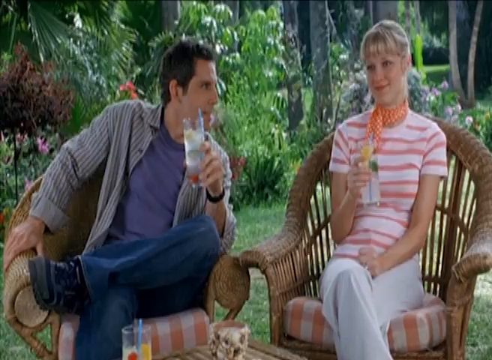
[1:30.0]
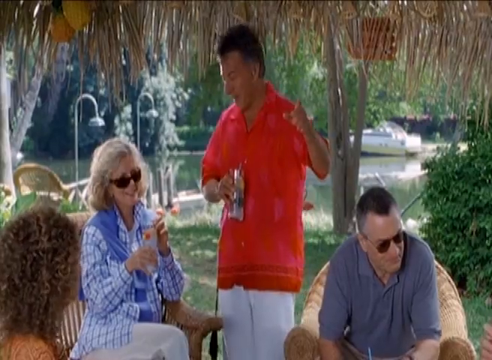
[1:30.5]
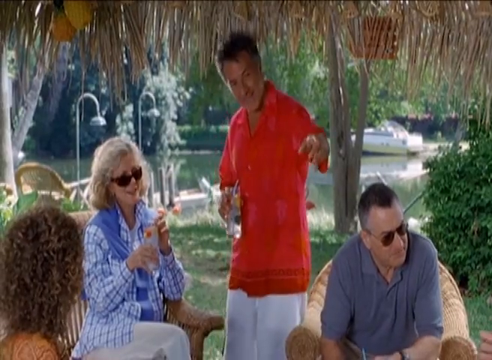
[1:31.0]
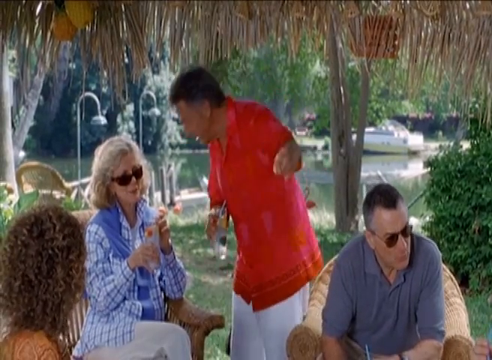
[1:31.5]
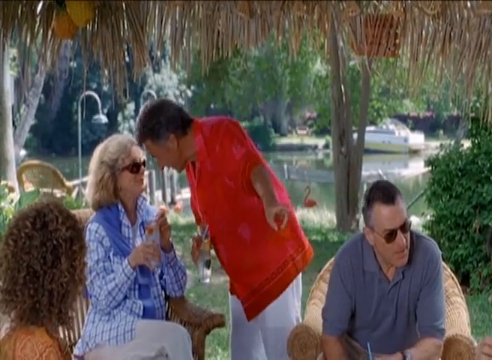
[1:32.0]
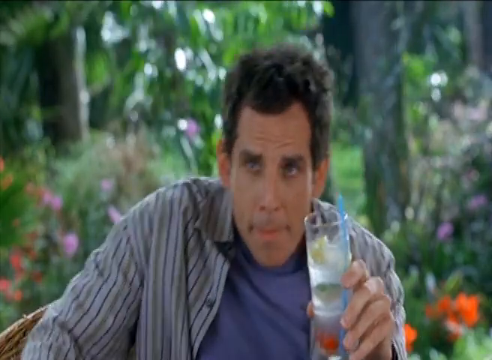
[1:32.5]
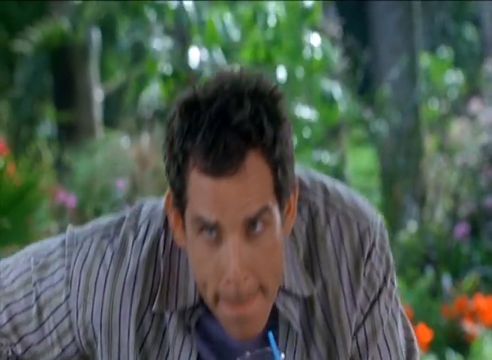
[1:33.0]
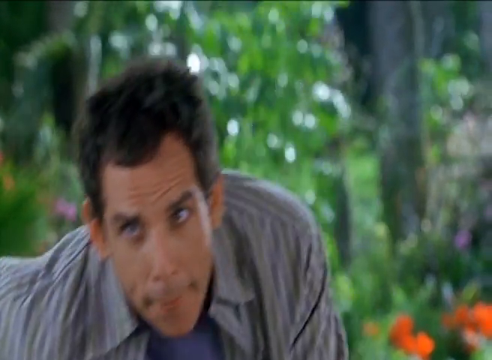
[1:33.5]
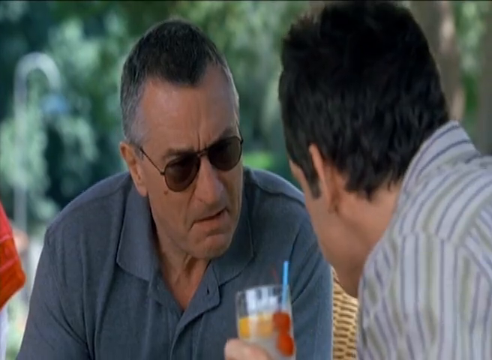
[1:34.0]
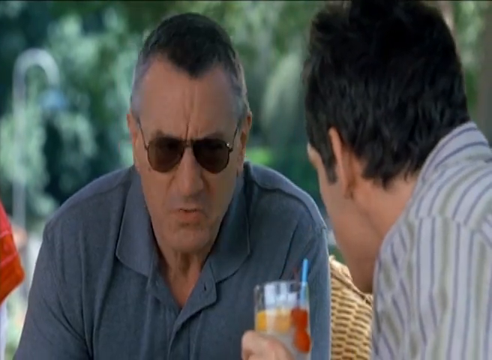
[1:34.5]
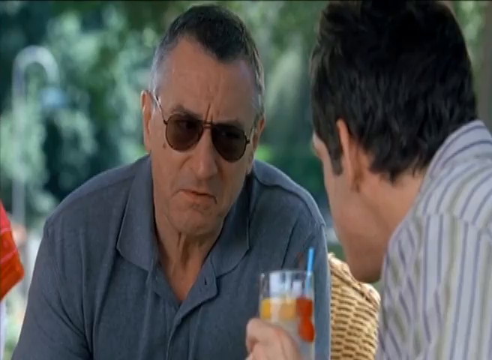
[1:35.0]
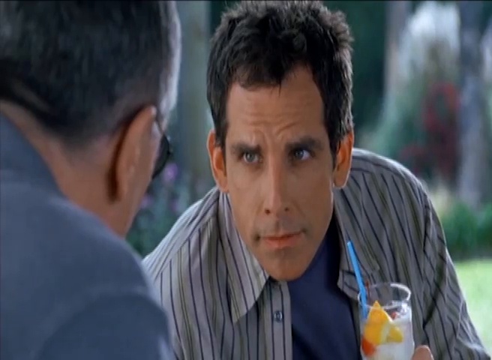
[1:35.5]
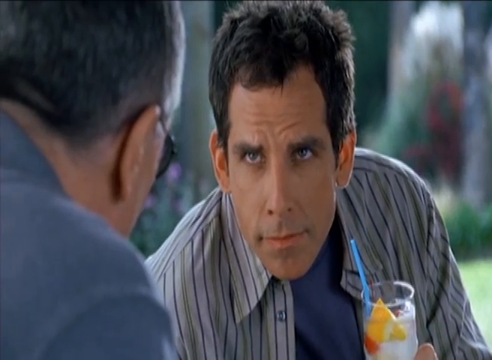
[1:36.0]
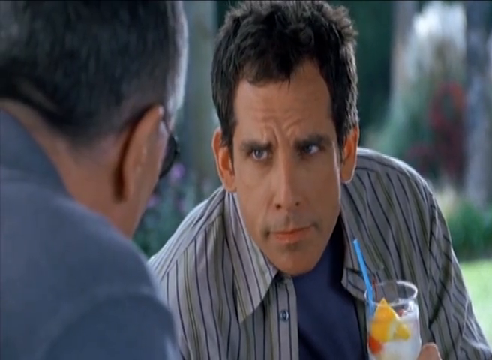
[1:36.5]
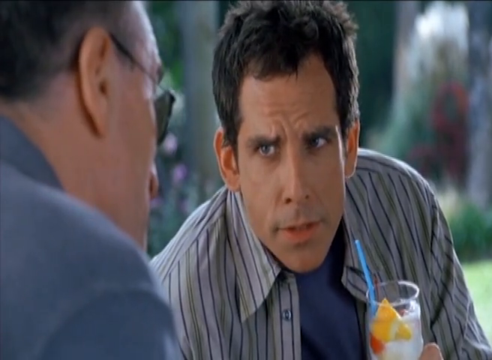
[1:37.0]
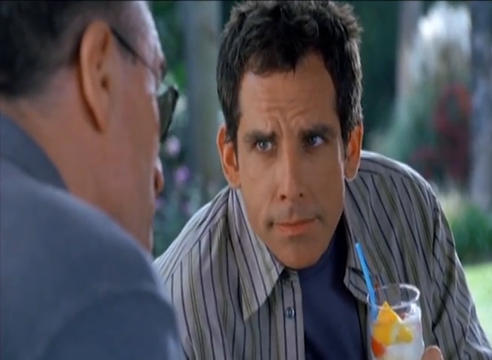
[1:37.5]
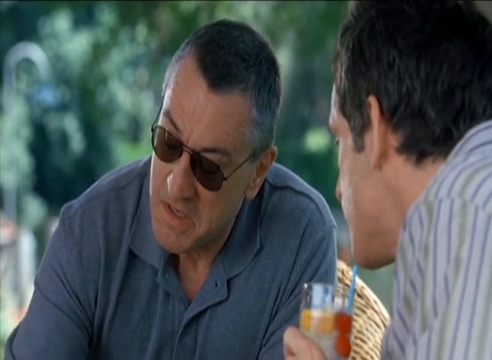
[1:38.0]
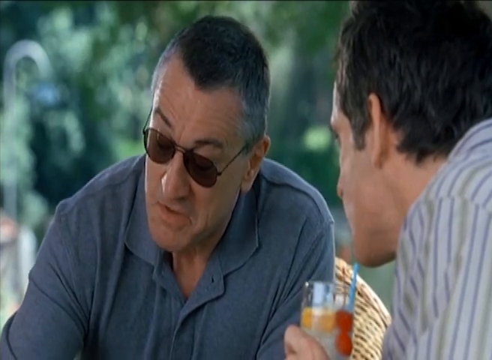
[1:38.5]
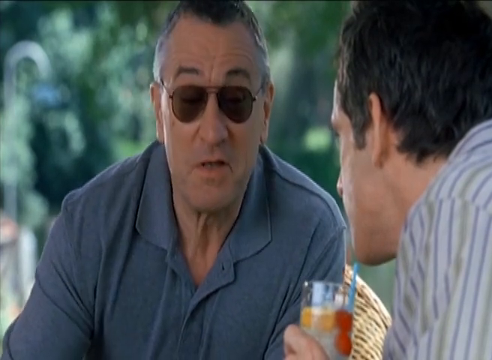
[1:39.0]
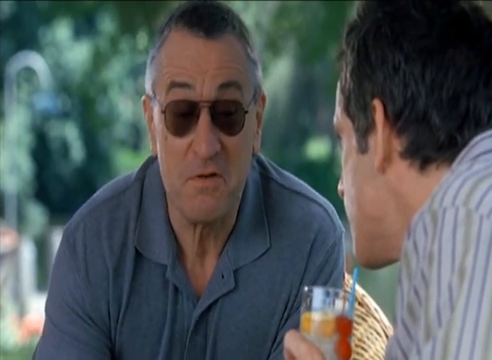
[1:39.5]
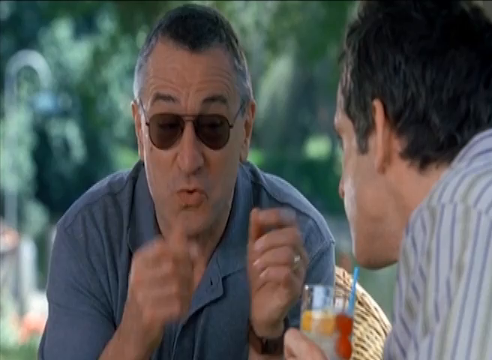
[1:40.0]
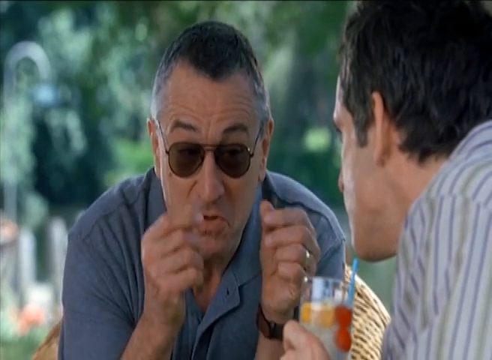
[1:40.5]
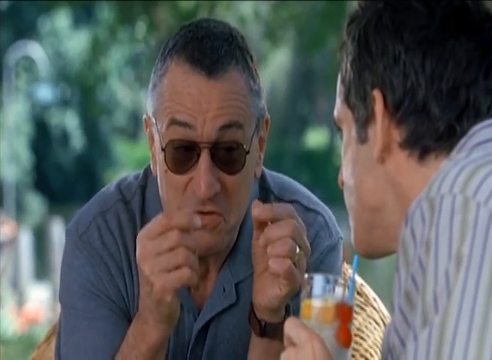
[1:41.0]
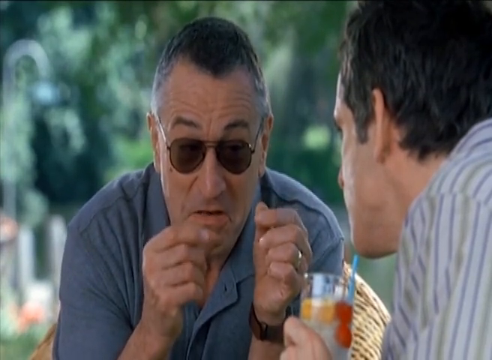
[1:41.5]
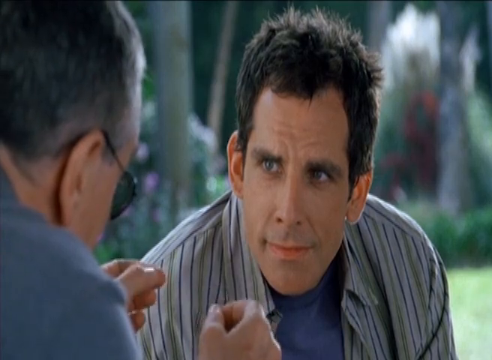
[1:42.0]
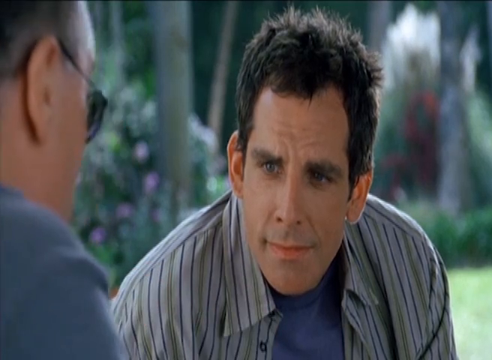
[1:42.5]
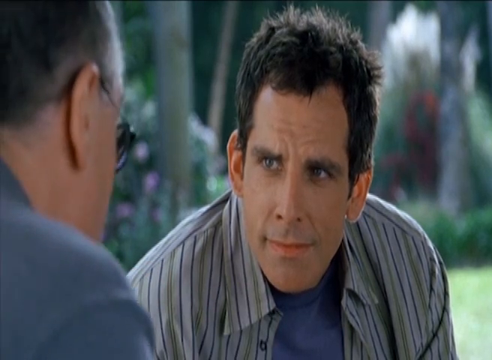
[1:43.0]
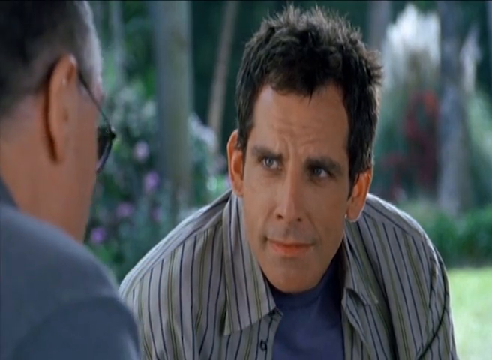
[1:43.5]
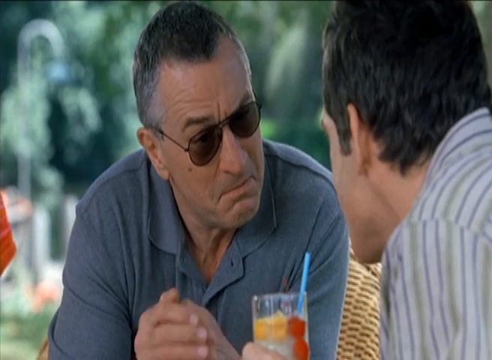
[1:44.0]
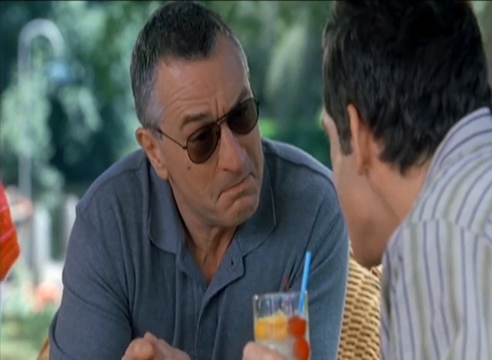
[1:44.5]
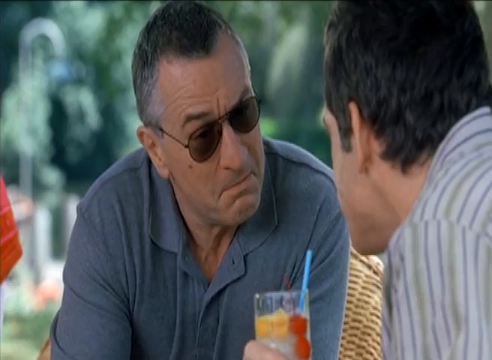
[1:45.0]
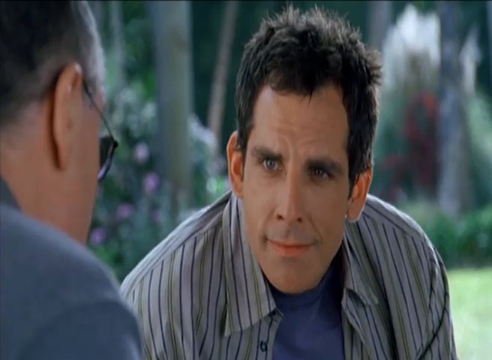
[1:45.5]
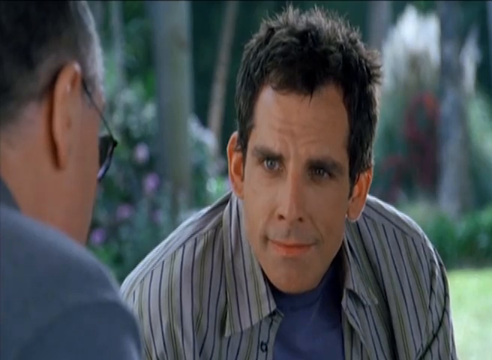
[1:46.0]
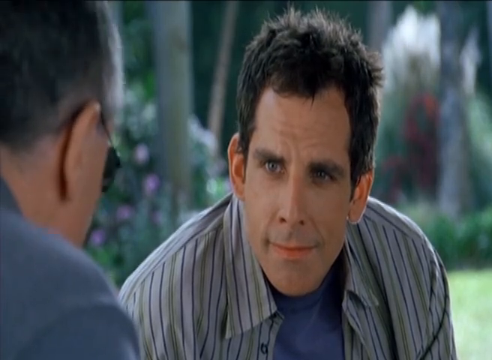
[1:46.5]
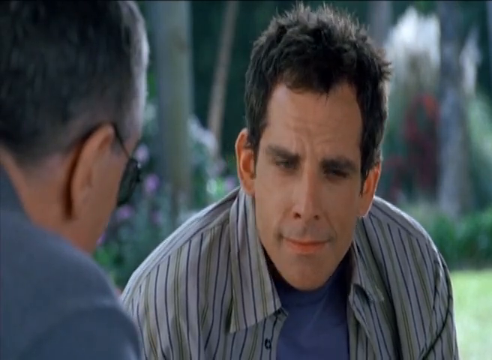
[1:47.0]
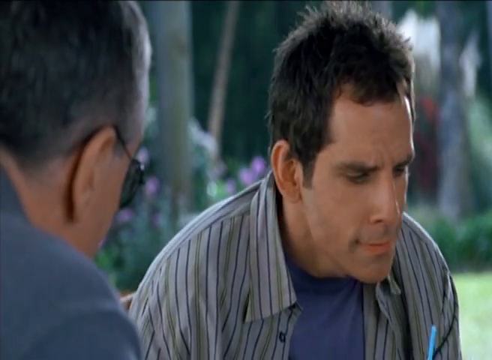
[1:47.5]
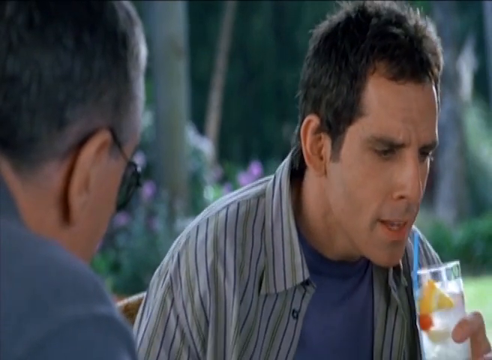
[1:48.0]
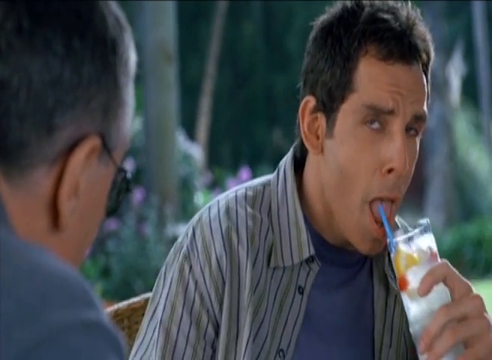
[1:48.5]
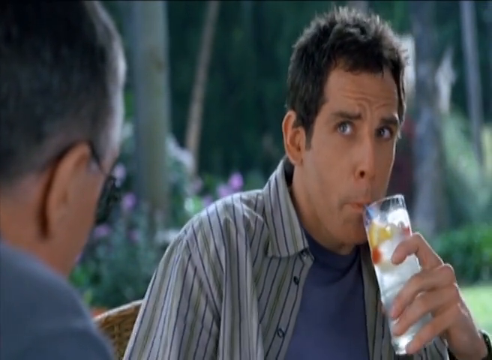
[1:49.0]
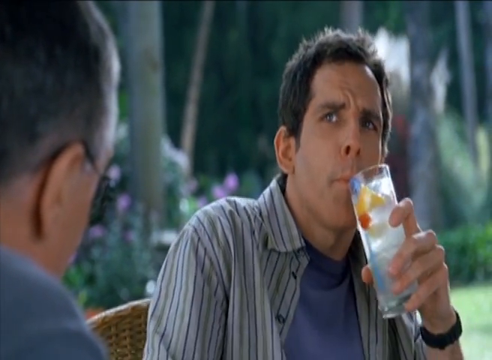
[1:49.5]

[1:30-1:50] The young couple sit with drinks in their hands, the young man intently looking at the young woman. The older gentleman in the red shirt talks while holding his drink in his right hand and gesturing with his left; he seems to be bowing down to the level of the older lady wearing sunglasses, who listens intently and smiles at him. The younger man looks like he is concentrating and trying to hear, leans forward, and starts to talk. The seated older gentleman in dark sunglasses seems to be talking with the younger man, and the shots go back and forth between them as they seem very intent on their conversation. The younger man sips his drink while the older gentleman gestures with both hands, and the young man listens intently. Then the young man turns back, leans back in his chair and sips his drink while looking at the other people.